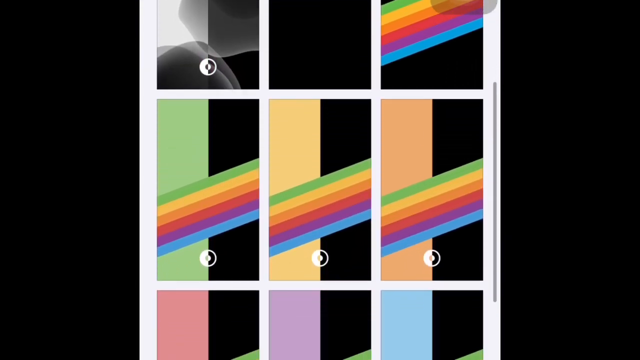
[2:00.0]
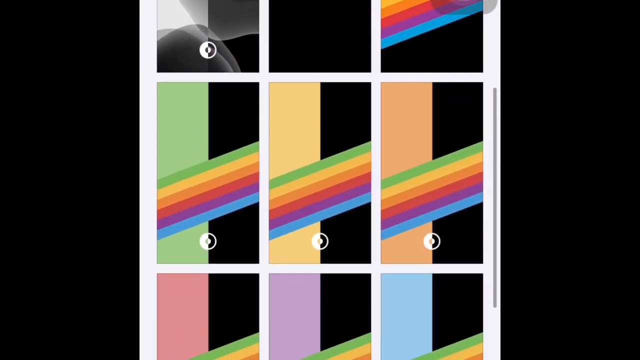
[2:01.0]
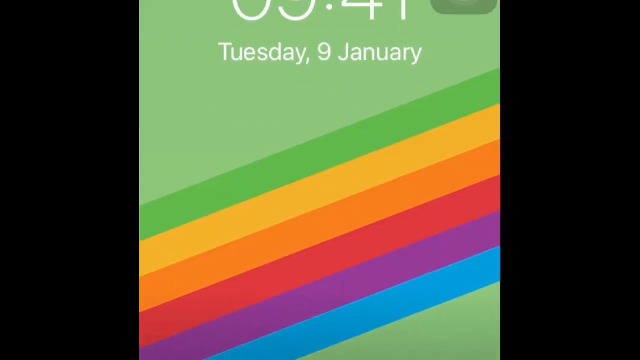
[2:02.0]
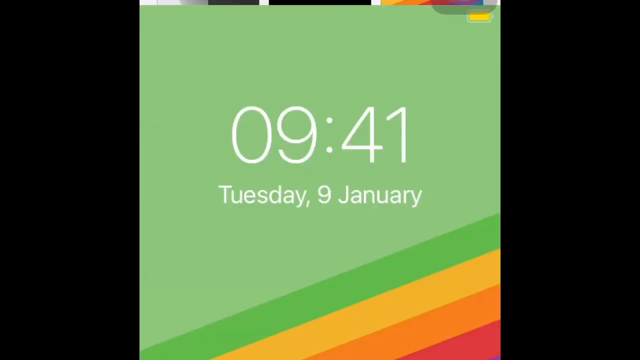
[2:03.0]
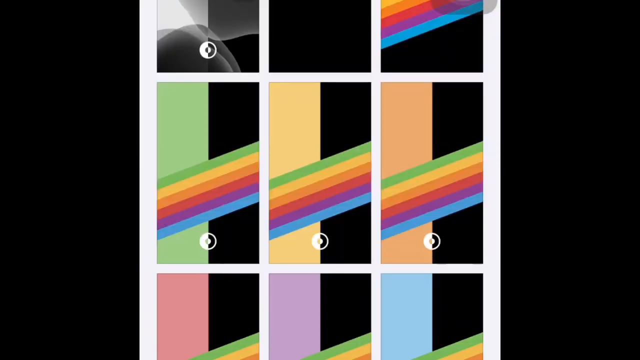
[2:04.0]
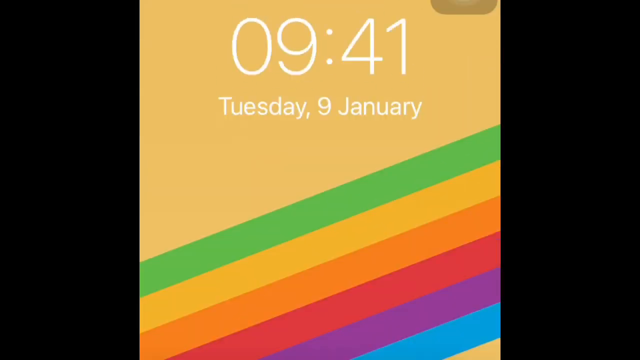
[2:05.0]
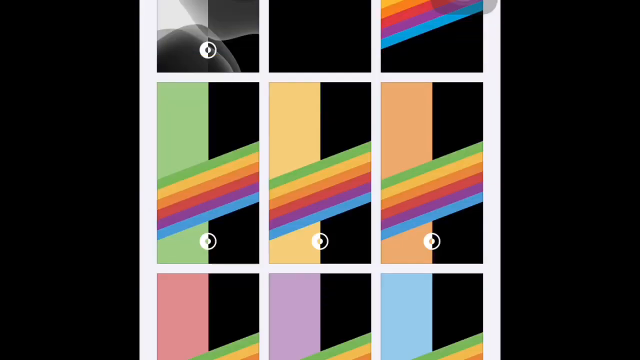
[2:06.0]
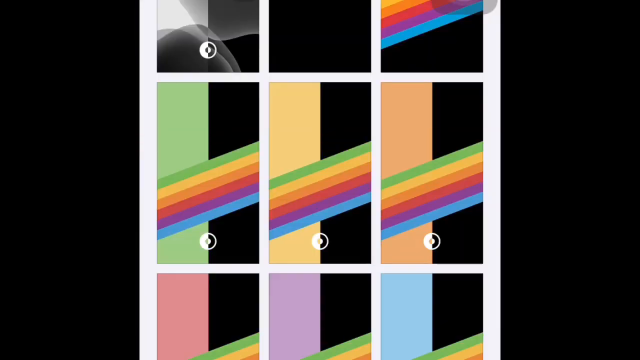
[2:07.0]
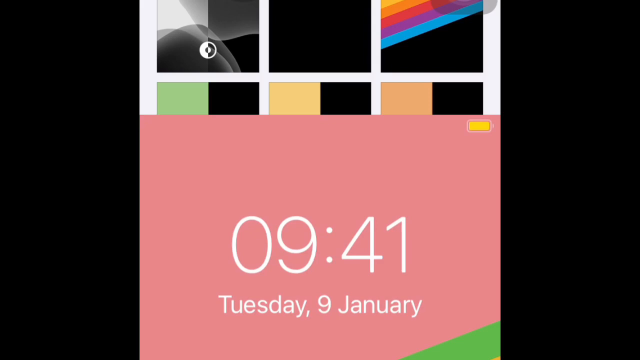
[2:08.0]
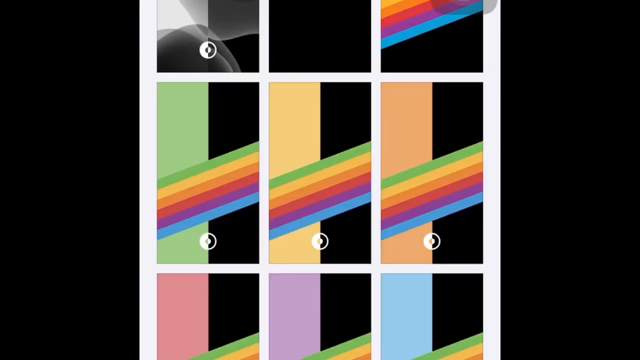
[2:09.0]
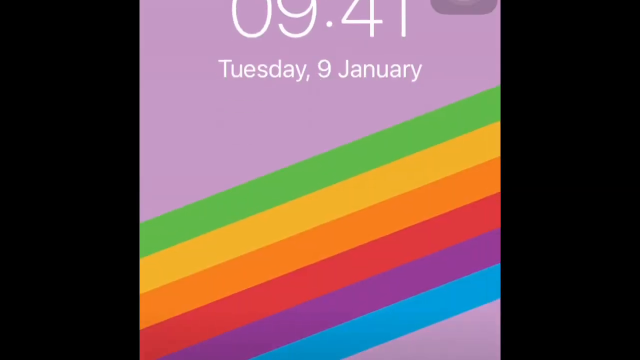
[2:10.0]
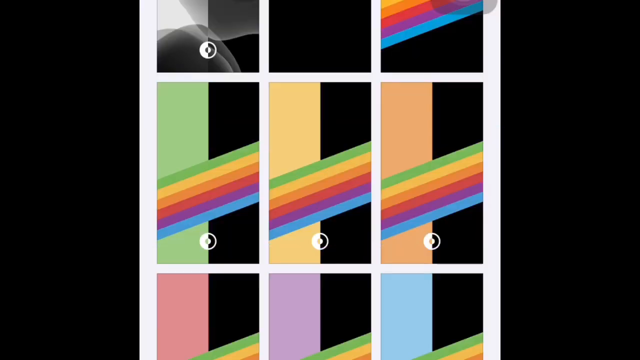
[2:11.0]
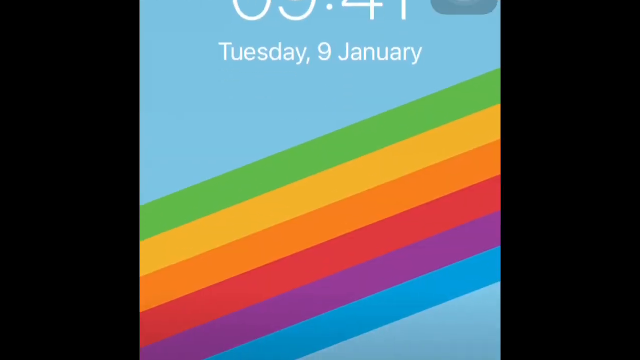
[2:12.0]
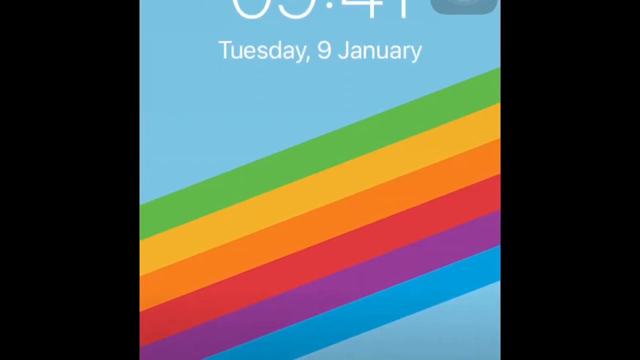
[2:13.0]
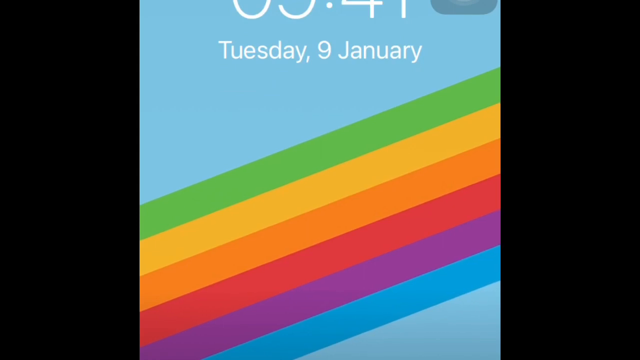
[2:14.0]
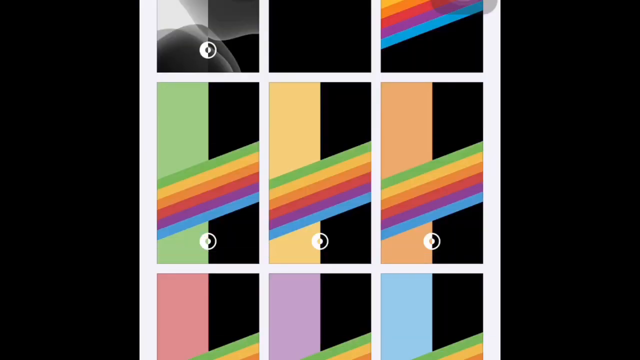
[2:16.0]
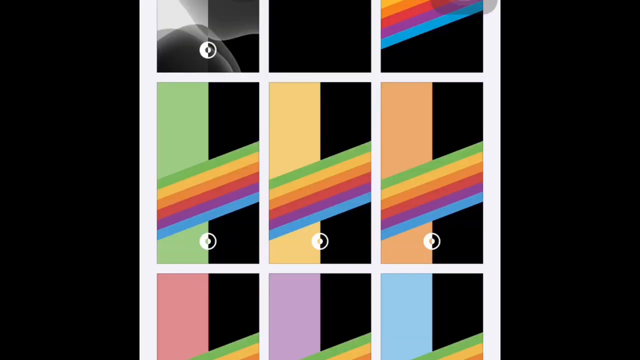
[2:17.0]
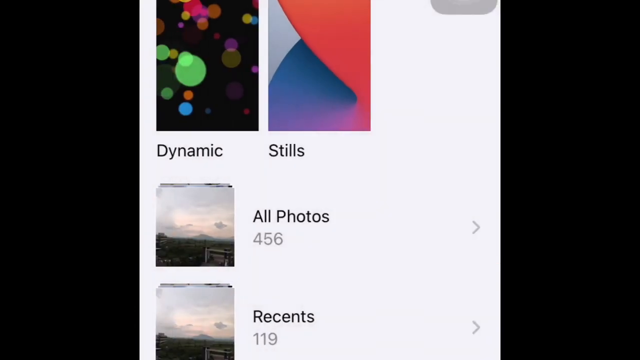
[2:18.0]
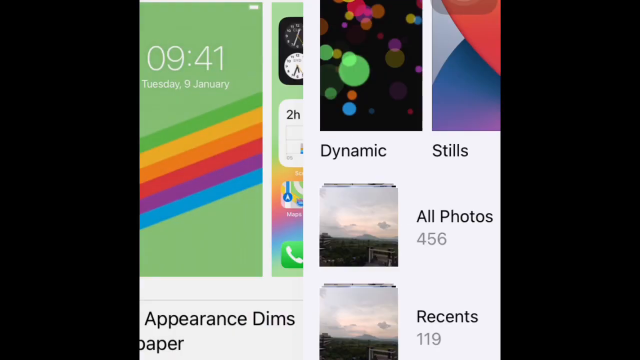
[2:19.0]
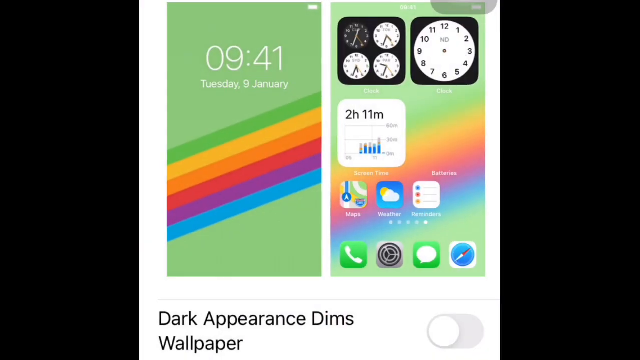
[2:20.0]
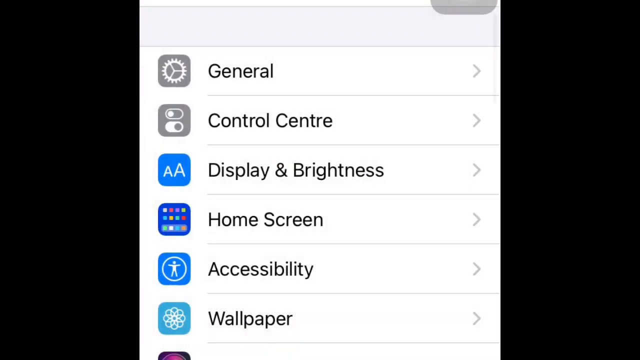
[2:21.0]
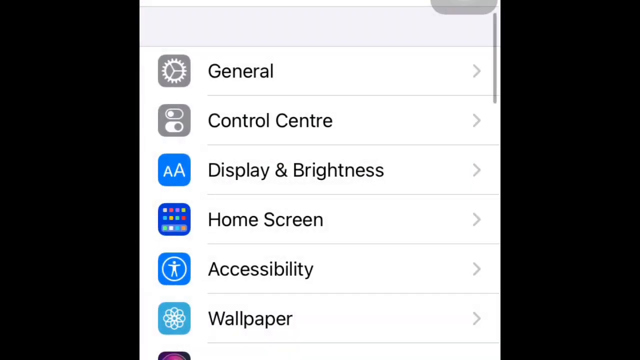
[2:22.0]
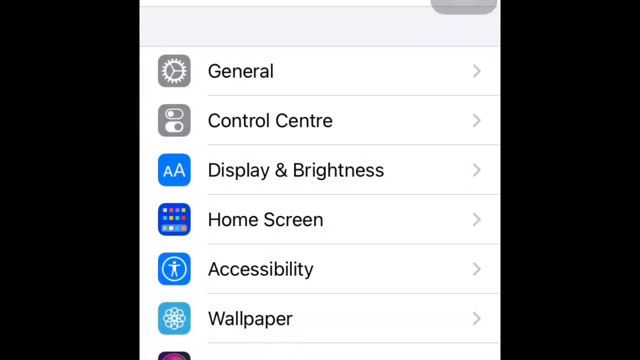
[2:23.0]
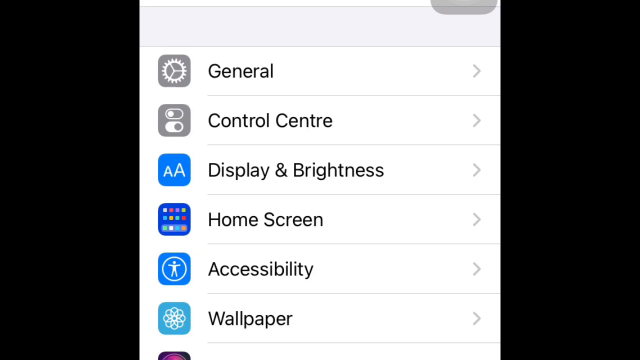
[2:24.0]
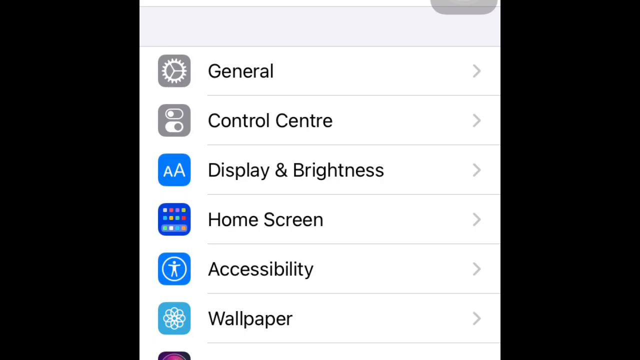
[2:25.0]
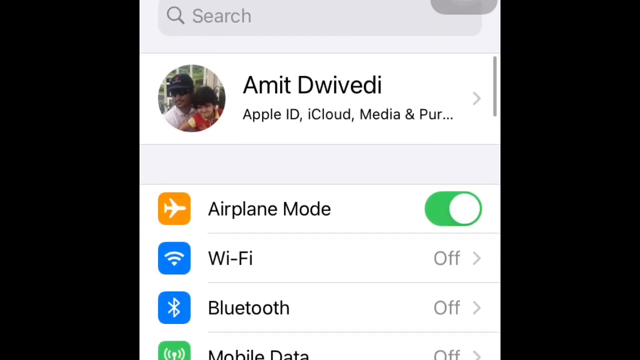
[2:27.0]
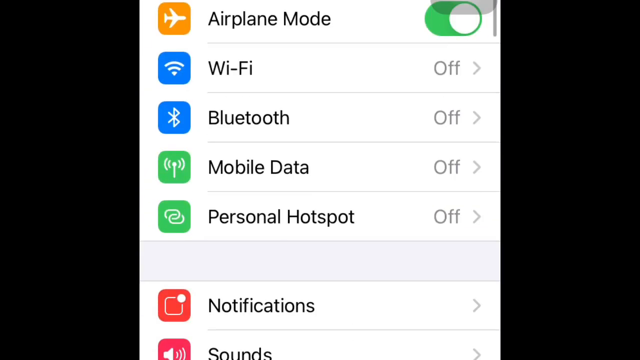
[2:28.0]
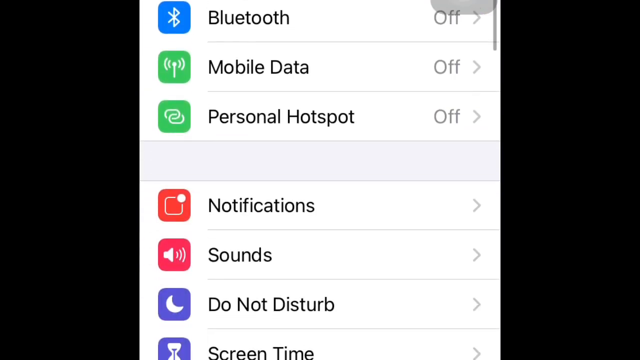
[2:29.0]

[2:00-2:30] In the wallpaper section, a thin white border runs down the left and right sides, and white borders divide each of the wallpapers. They are three across: three in the center, the bottom half of three across the top, and the bottom half of three across the bottom. As the view slowly scrolls down a little, one is pulled up showing "941" at the top and, in white below that, "Tuesday 9 January". Its colors are light green, dark green, yellow, orange, dark green, red, purple, blue and light blue; the light green takes up the area from the top left about halfway down, angling up to the right to about two inches from the top, and the rest are thin borders. The view goes back to the wallpapers and bounces back and forth repeatedly, changing the color scheme: one runs from the top purple, green, light orange, dark orange, red, purple, light blue, with gray in the bottom right corner; another is blue, green, light orange, dark orange, red, purple, light blue and an even lighter blue. It returns to the wallpaper selection, scrolls back to "dynamic" and "stills", and then over to a settings section with general, control center and four other clickable options. It scrolls down to a screen with a search bar at the top and a profile picture of a man with a small child, with their name next to it on the right. Below that are airplane mode, Wi-Fi and Bluetooth, each with an on/off toggle on the right; only airplane mode is toggled on. Scrolling down to notifications, sounds and do not disturb, everything is toggled off except airplane mode.